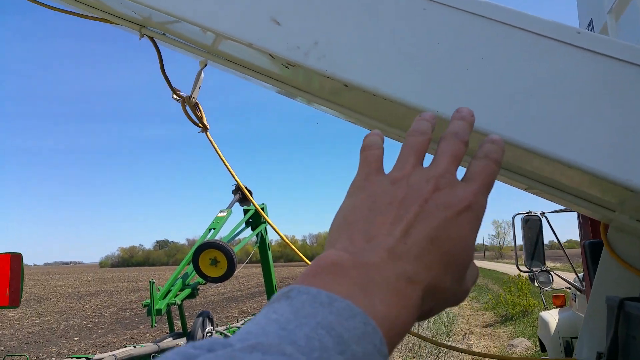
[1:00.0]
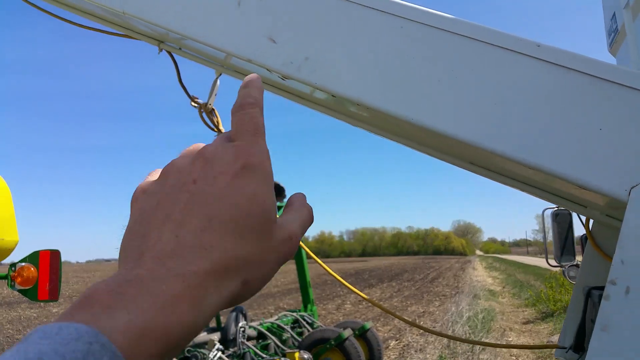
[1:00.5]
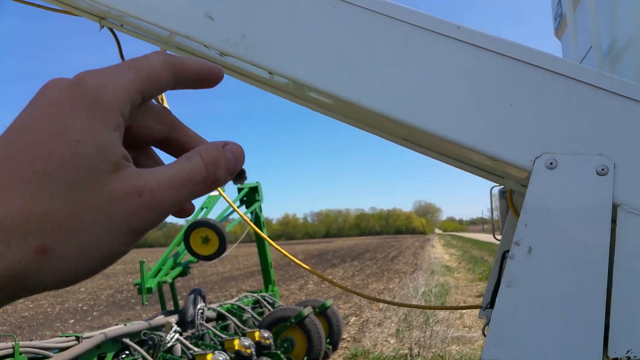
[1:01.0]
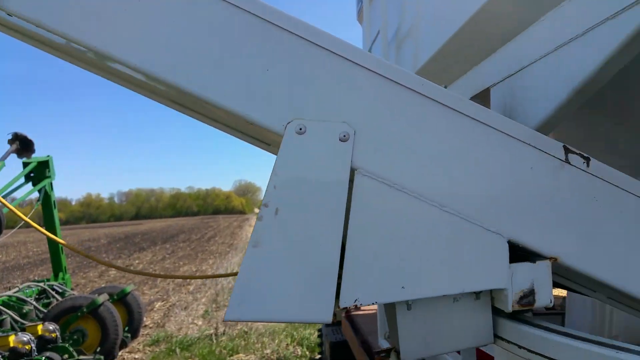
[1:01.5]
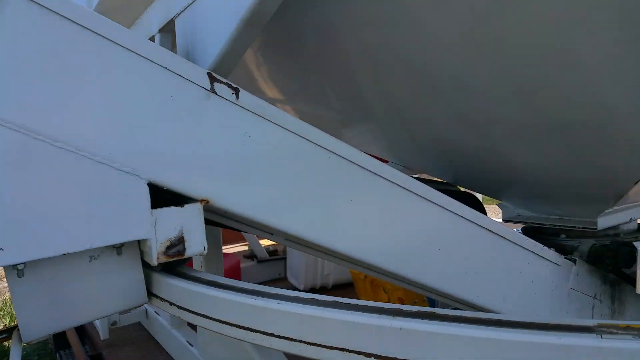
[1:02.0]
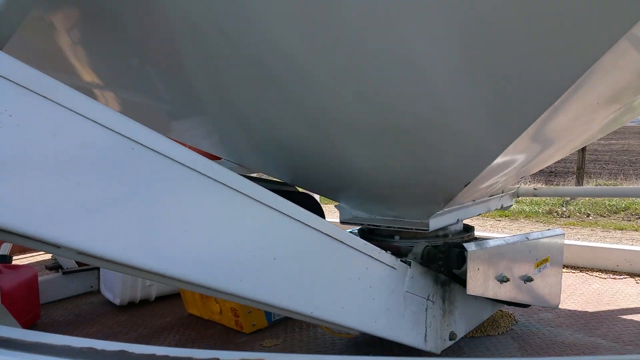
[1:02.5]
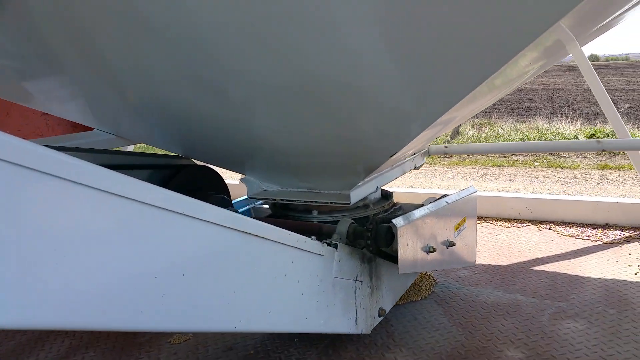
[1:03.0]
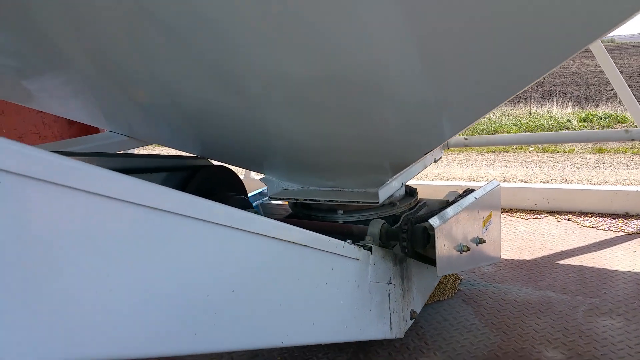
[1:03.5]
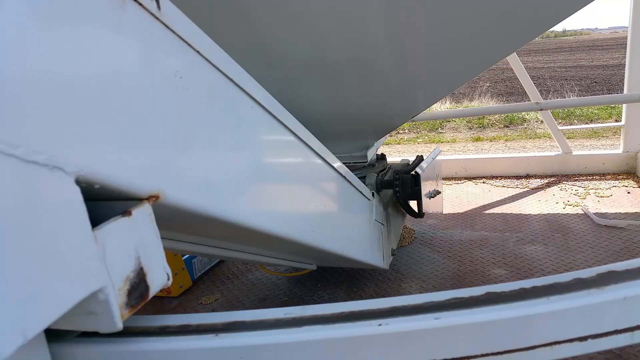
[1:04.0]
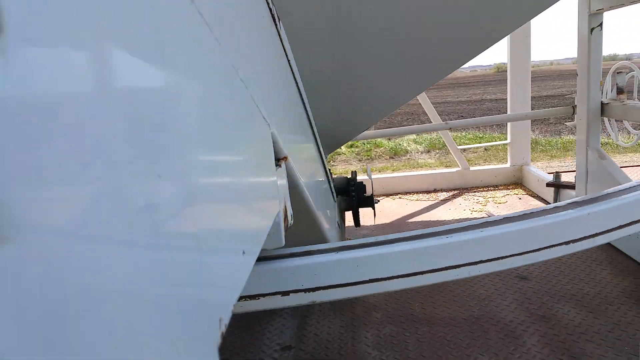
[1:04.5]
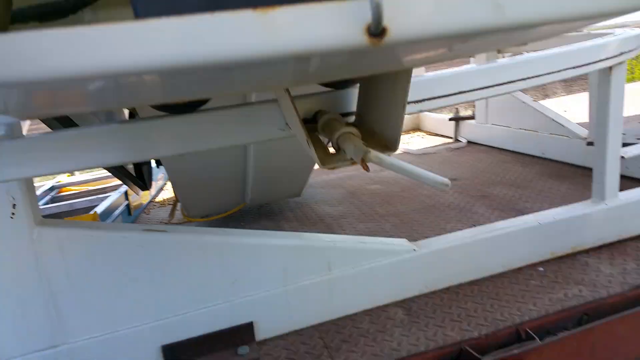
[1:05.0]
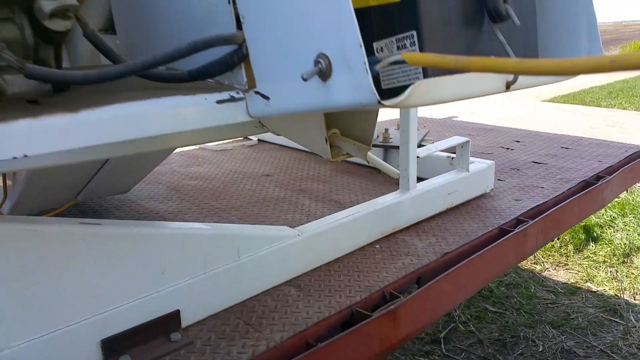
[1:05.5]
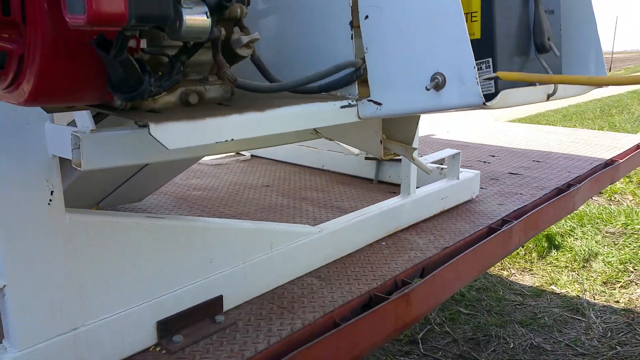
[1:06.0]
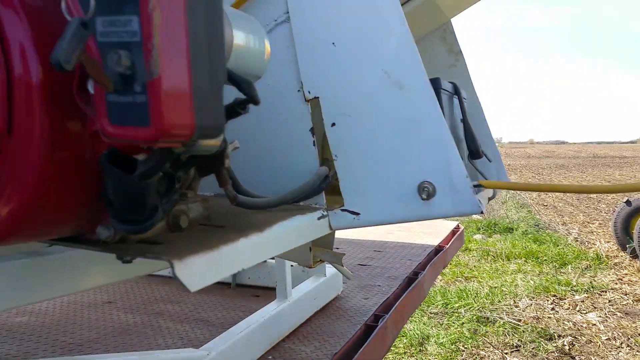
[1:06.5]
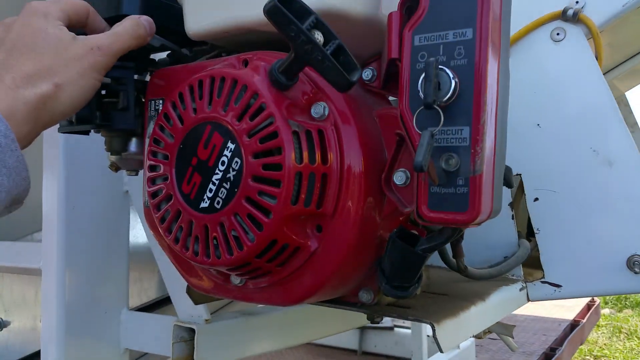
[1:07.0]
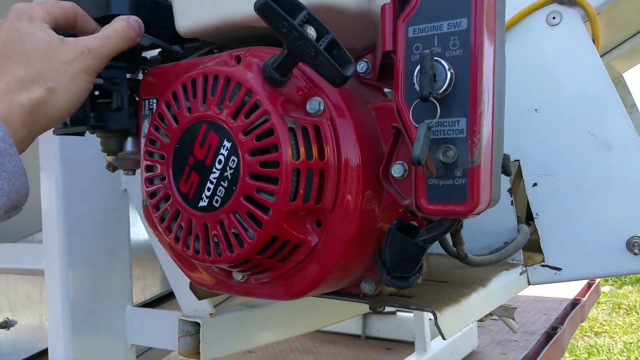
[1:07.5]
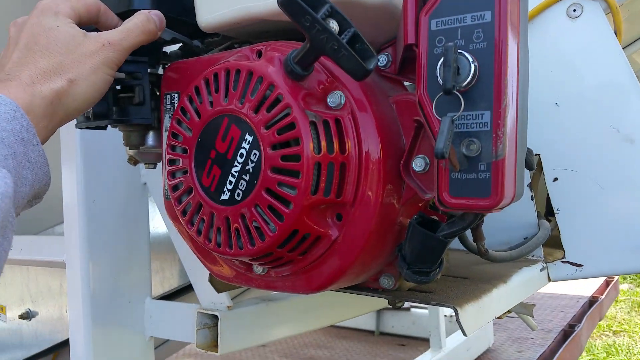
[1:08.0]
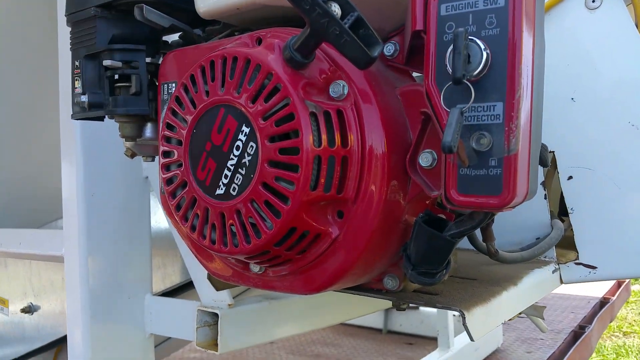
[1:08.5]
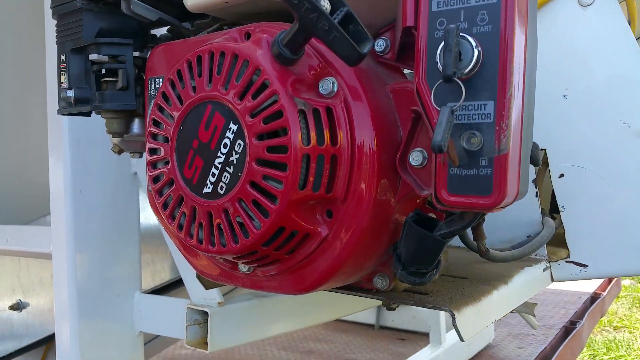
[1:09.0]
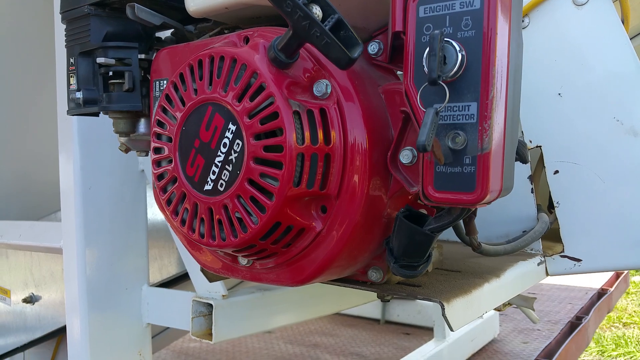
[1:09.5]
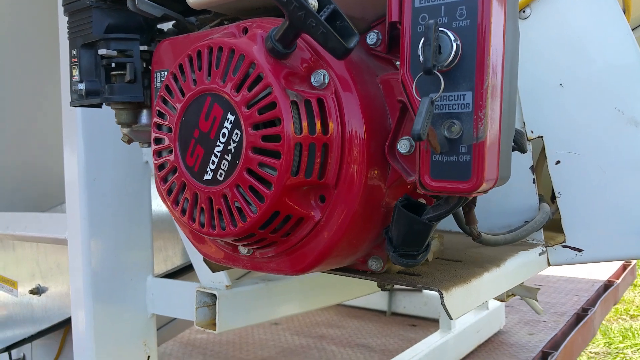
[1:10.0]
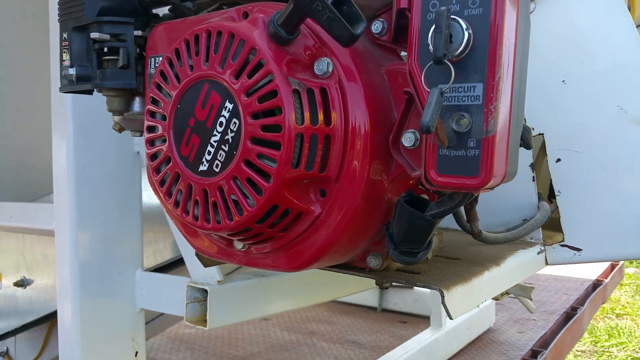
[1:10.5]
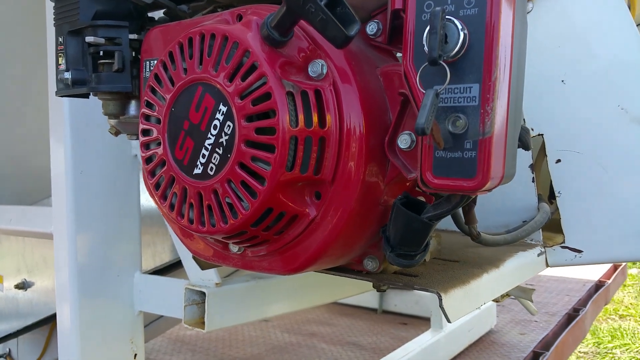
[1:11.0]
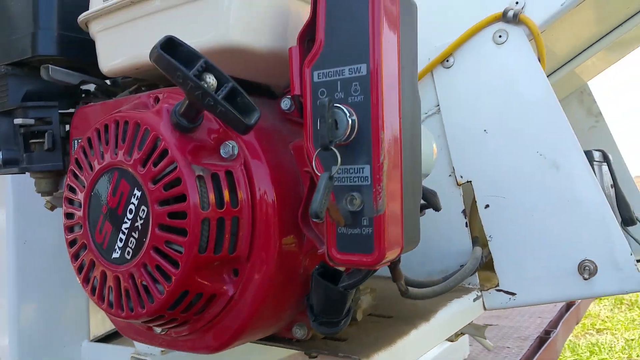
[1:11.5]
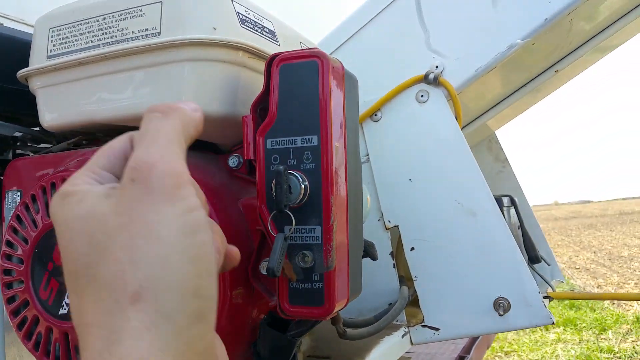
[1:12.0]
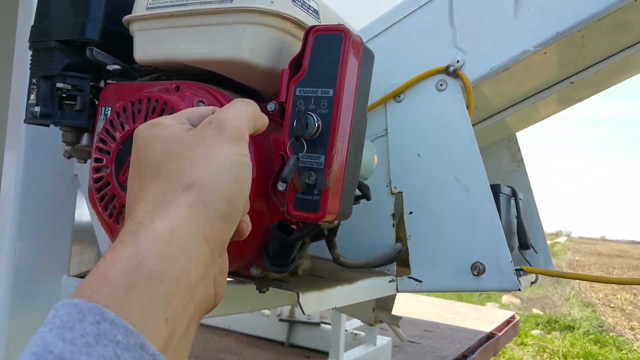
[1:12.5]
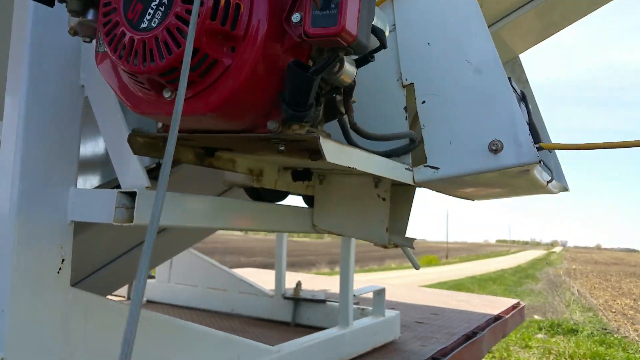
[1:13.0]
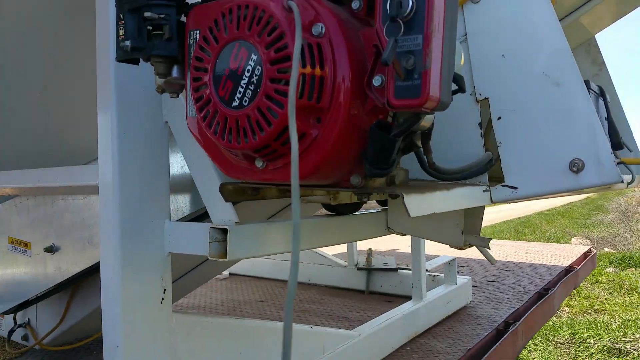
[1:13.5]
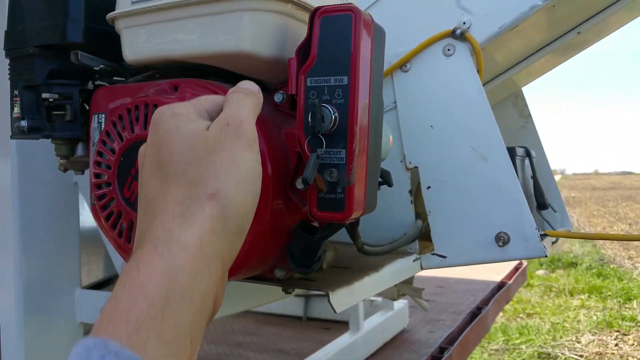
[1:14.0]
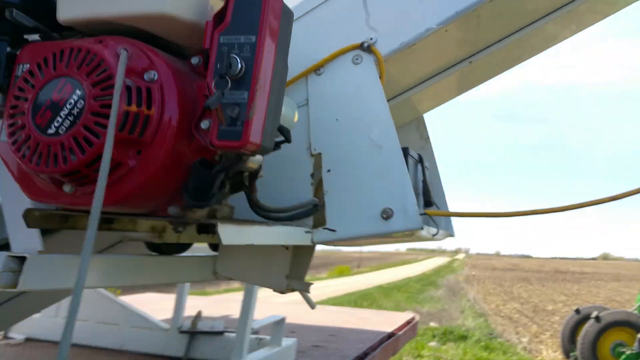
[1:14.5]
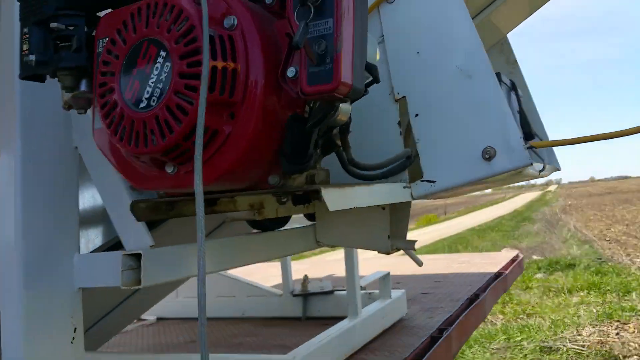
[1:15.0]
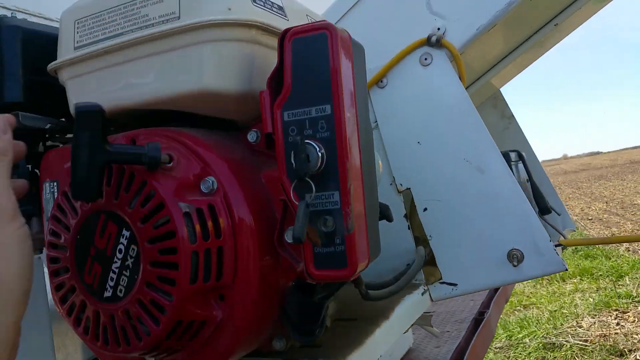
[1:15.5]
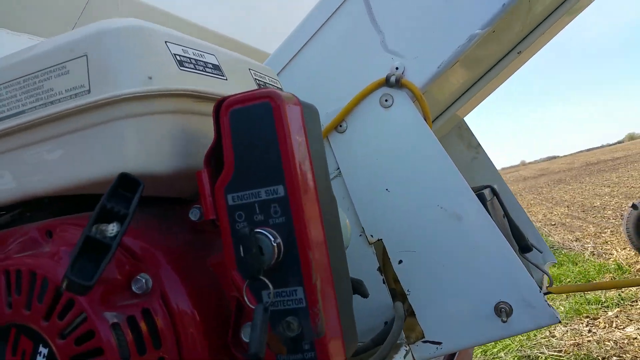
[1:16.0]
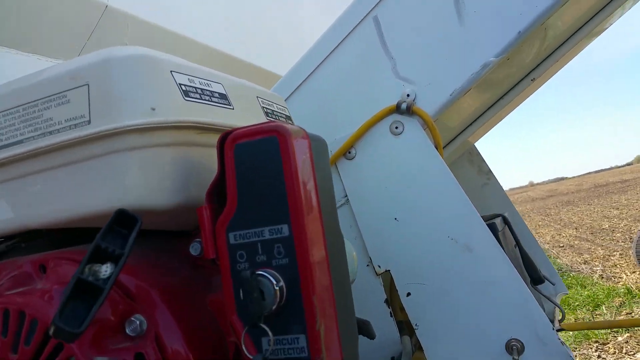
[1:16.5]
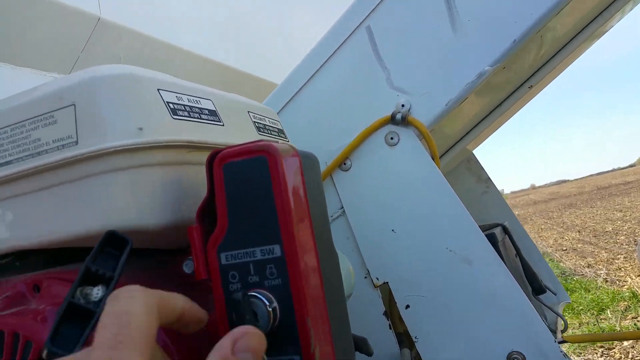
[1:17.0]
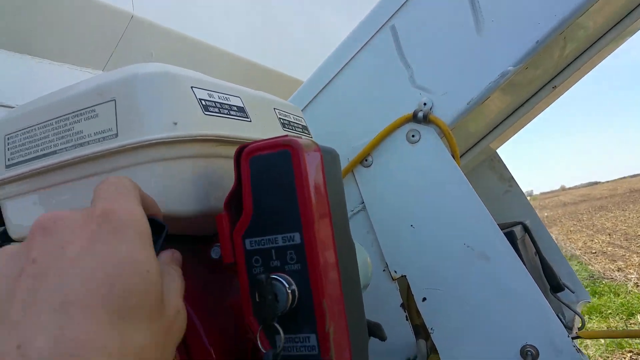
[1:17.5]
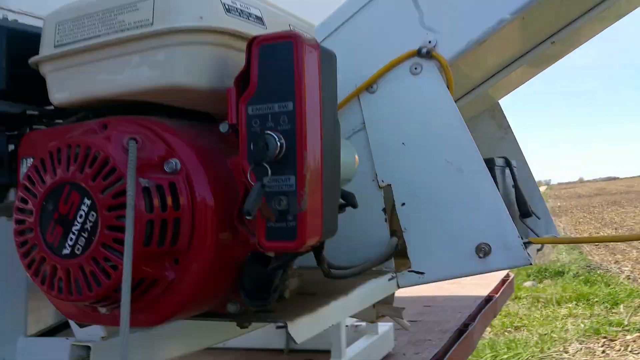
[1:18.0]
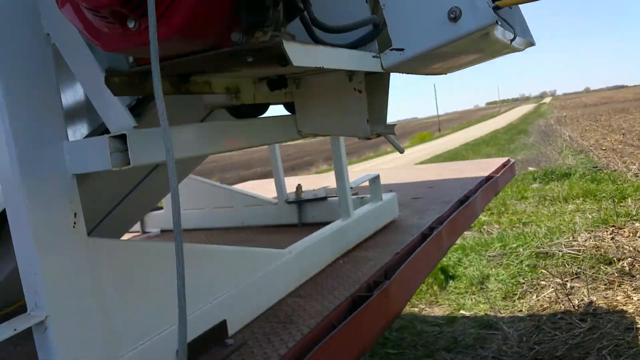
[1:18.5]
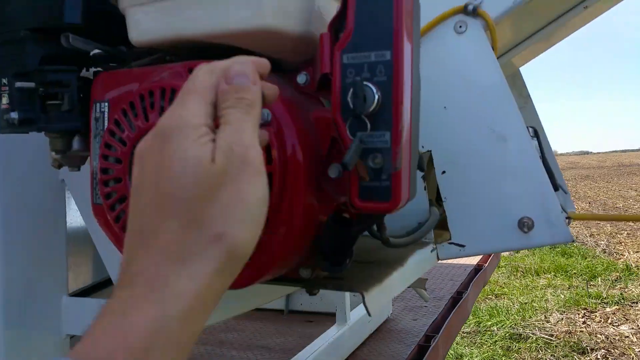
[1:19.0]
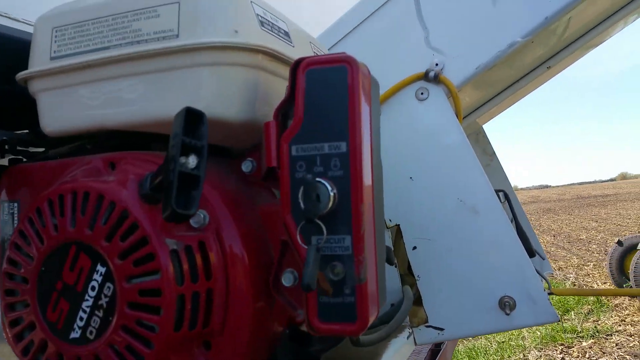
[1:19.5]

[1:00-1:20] The man remains behind the camera, with his left hand visible in front of it. He makes a twirling motion with his fingers pointed at the long white chute connecting the truck to the large agricultural machine. The camera moves to the right toward where the chute connects to the large container attached to the truck. He steps to one side of the chute, revealing a red motor connecting the chute. He touches the motor with his left hand, then reaches for a crank on the motor and pulls it toward him with his left hand. The camera shakes up and down as he cranks the motor, and then he reaches for the crank again and cranks it even more.